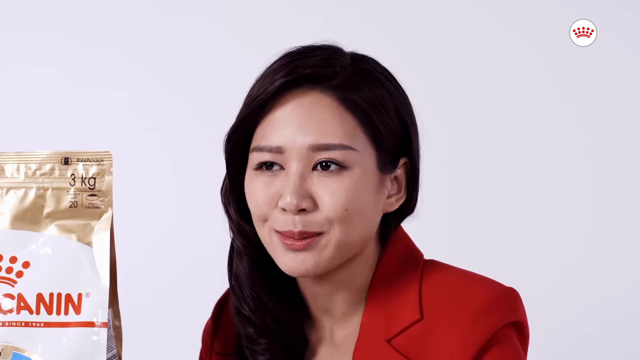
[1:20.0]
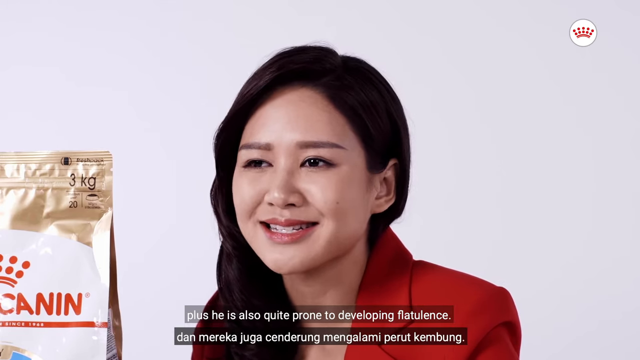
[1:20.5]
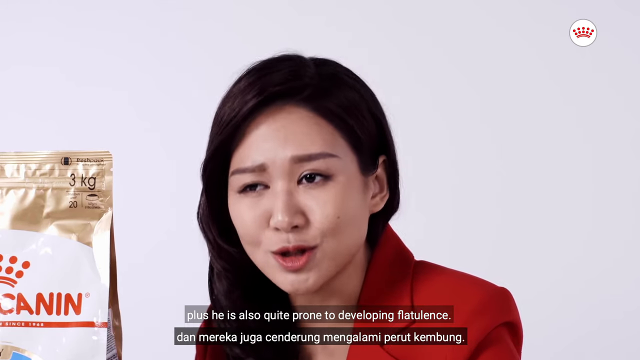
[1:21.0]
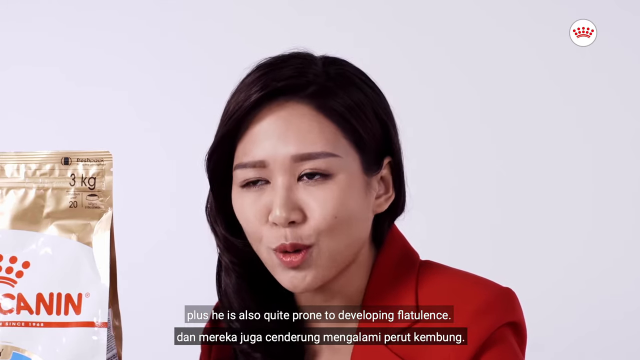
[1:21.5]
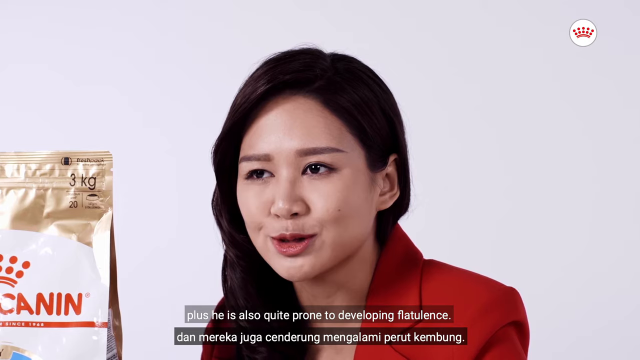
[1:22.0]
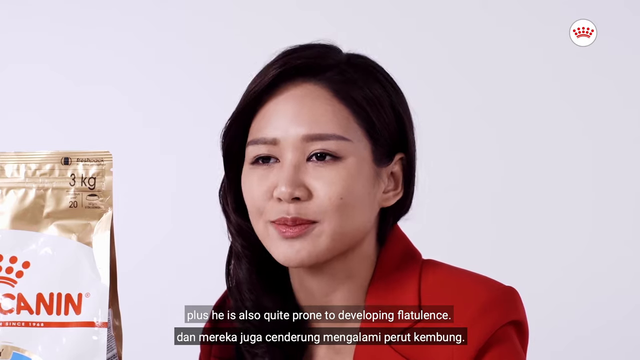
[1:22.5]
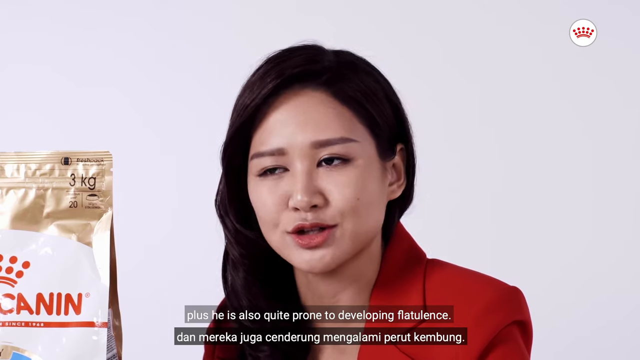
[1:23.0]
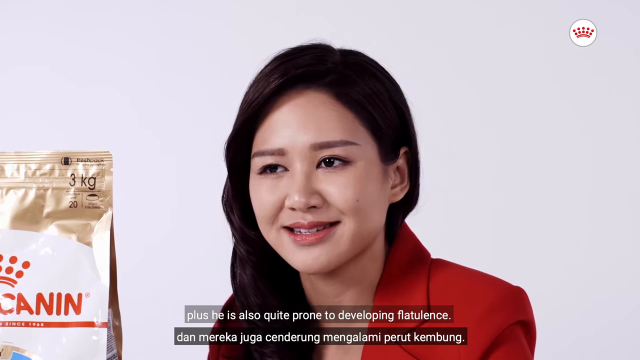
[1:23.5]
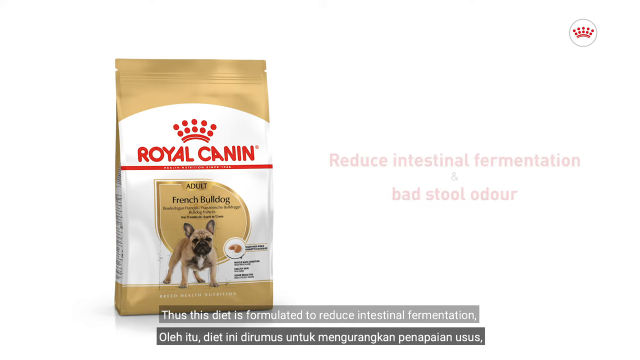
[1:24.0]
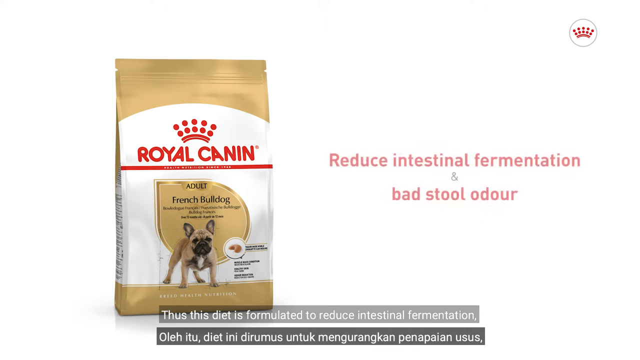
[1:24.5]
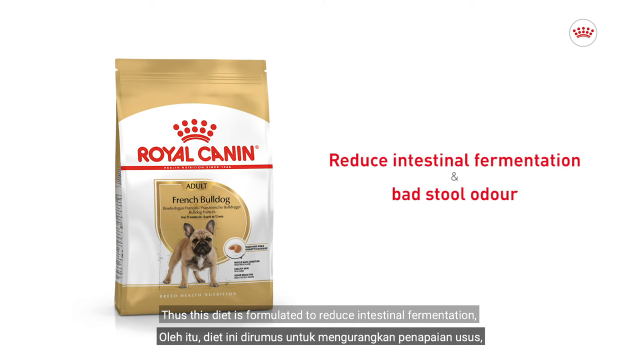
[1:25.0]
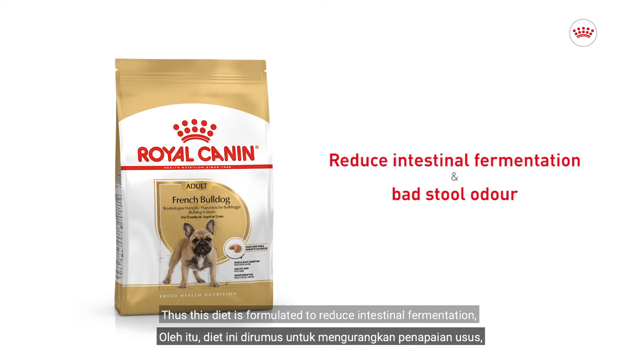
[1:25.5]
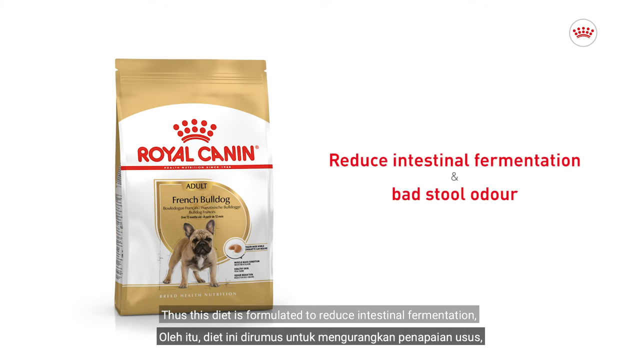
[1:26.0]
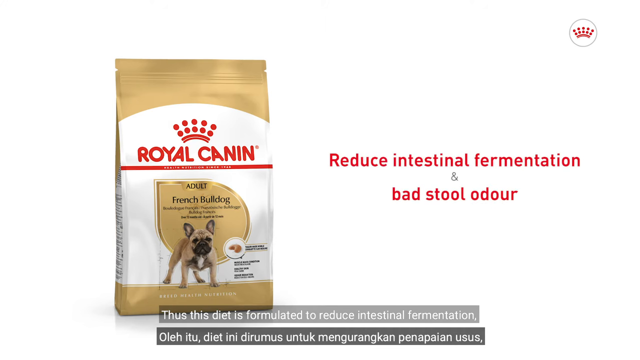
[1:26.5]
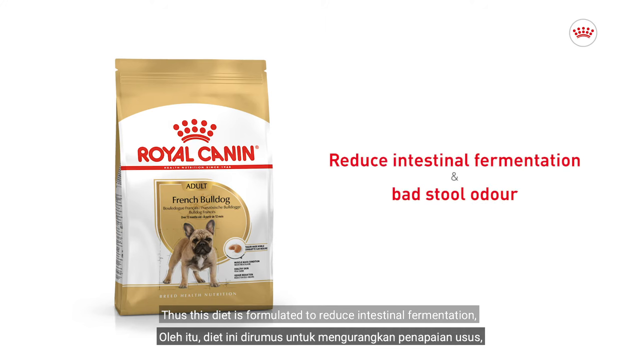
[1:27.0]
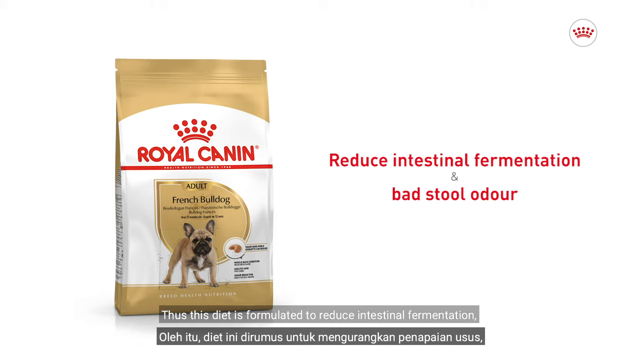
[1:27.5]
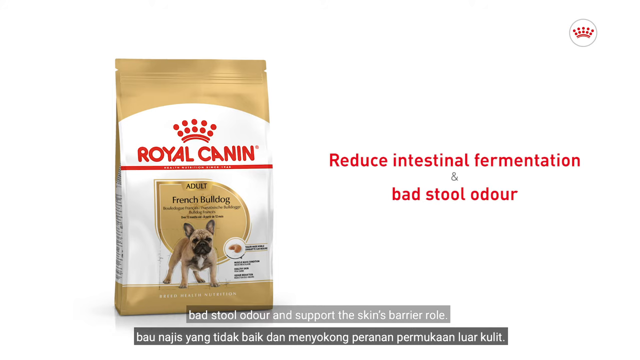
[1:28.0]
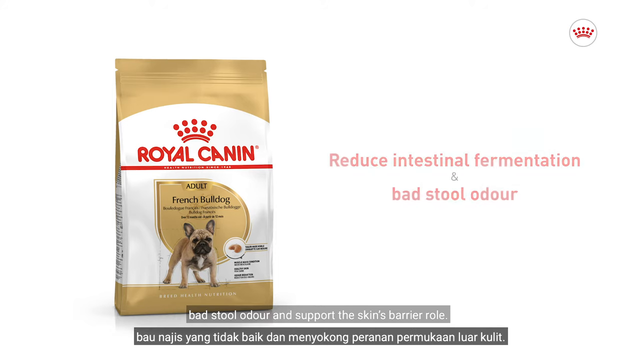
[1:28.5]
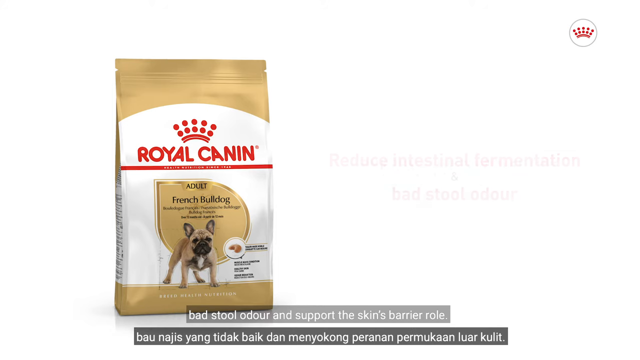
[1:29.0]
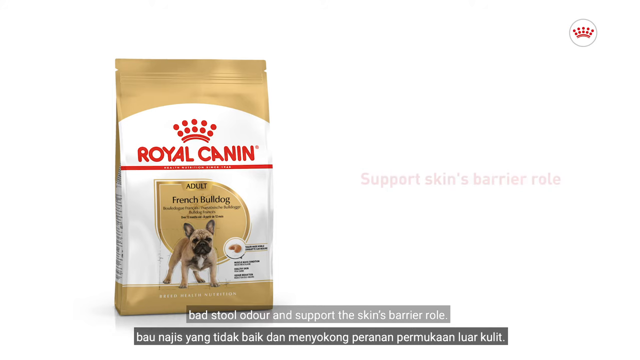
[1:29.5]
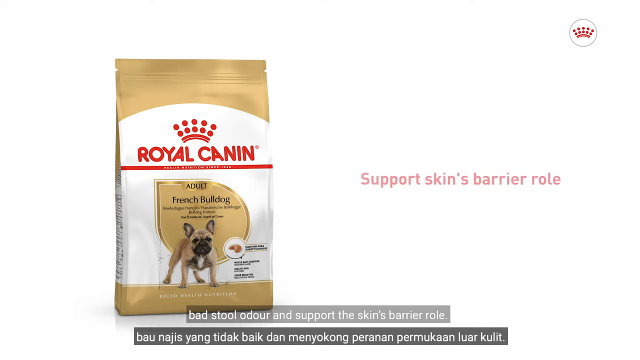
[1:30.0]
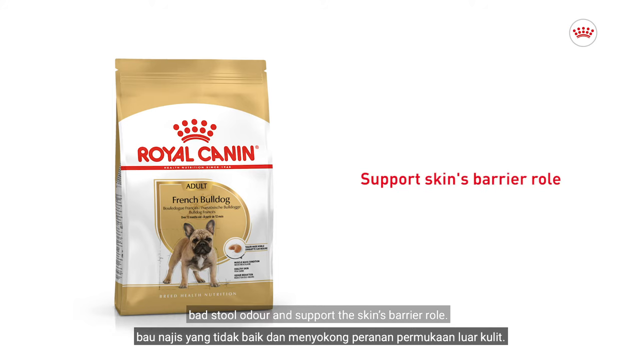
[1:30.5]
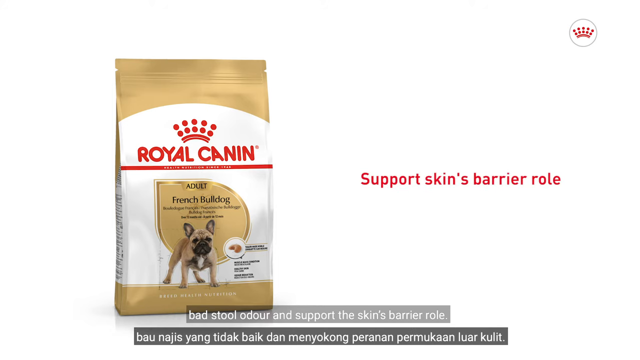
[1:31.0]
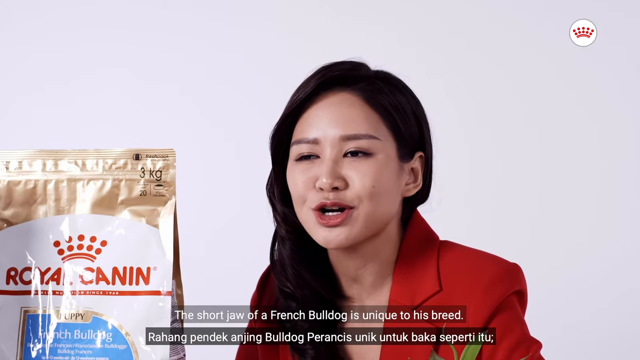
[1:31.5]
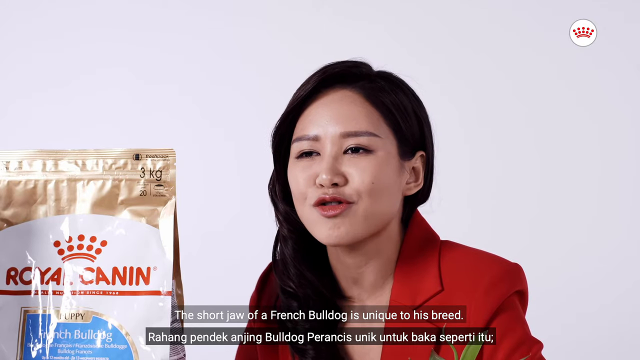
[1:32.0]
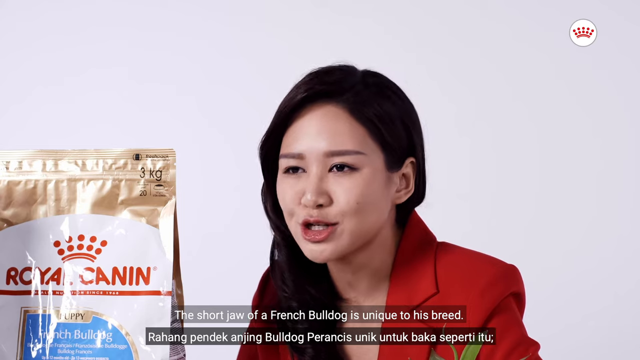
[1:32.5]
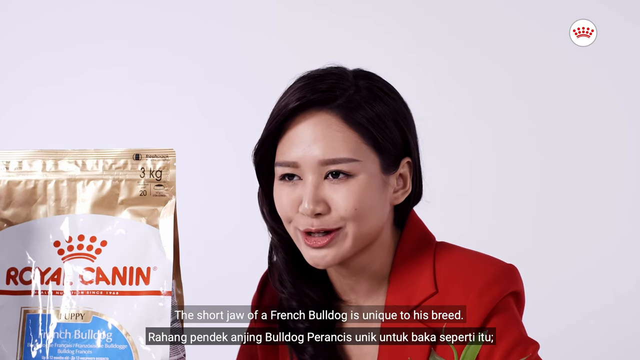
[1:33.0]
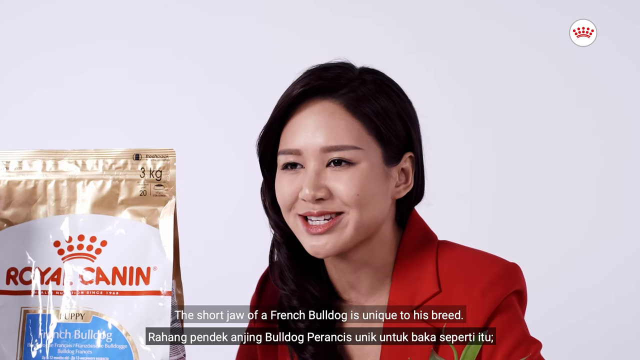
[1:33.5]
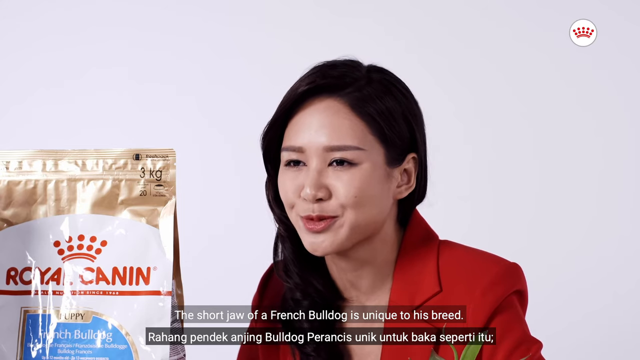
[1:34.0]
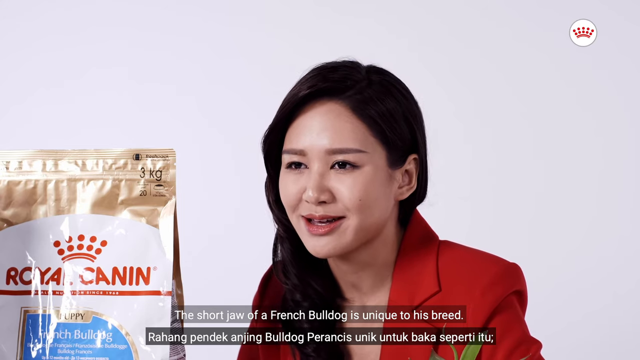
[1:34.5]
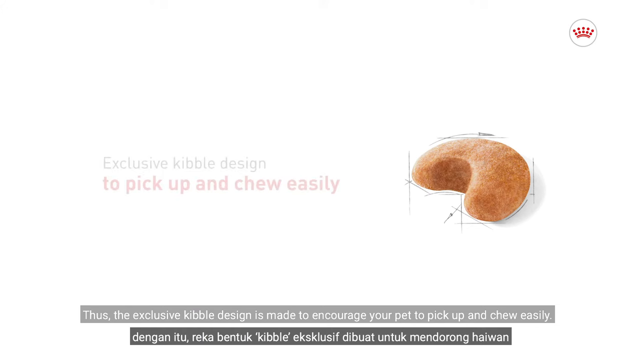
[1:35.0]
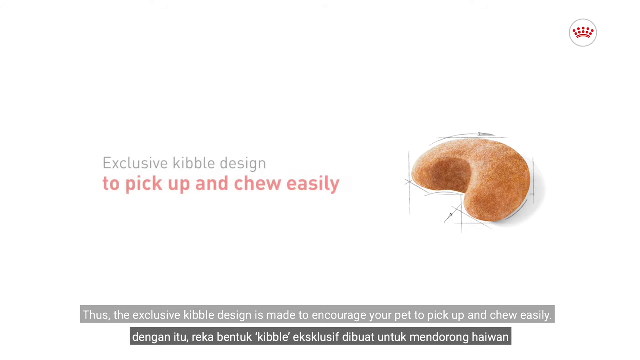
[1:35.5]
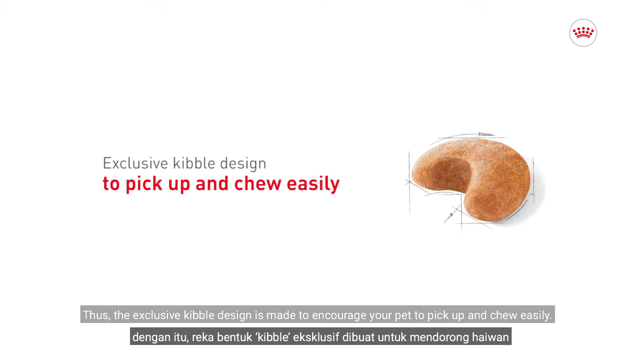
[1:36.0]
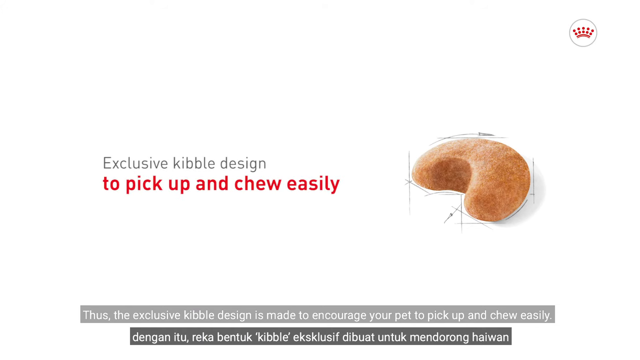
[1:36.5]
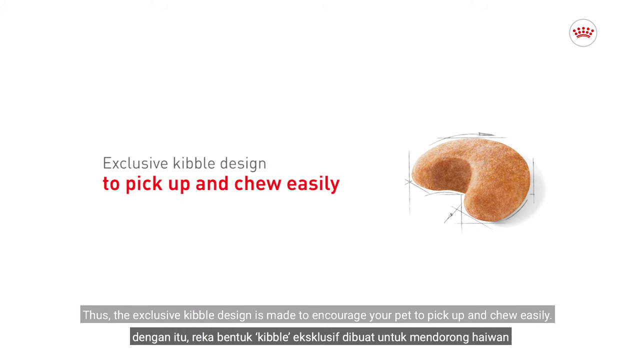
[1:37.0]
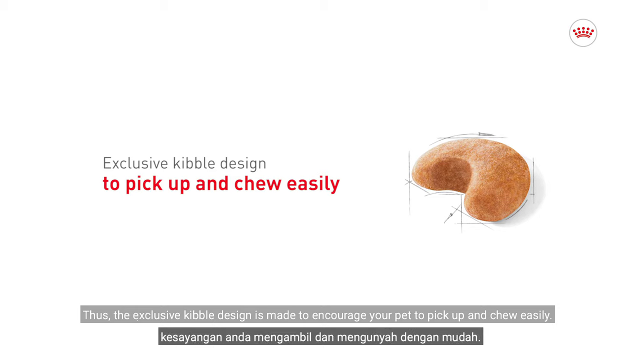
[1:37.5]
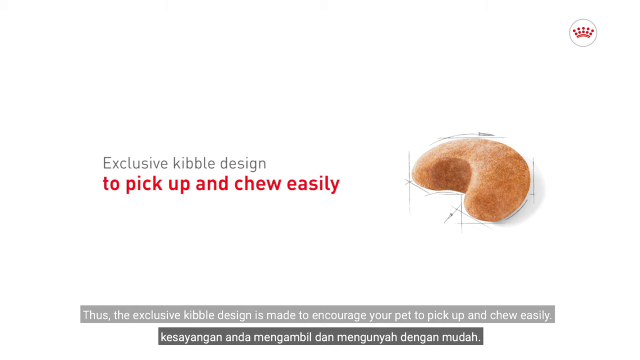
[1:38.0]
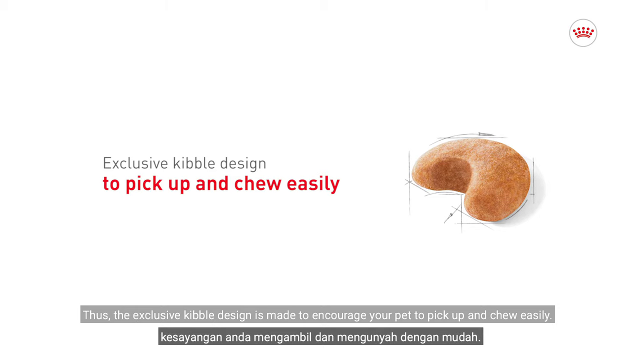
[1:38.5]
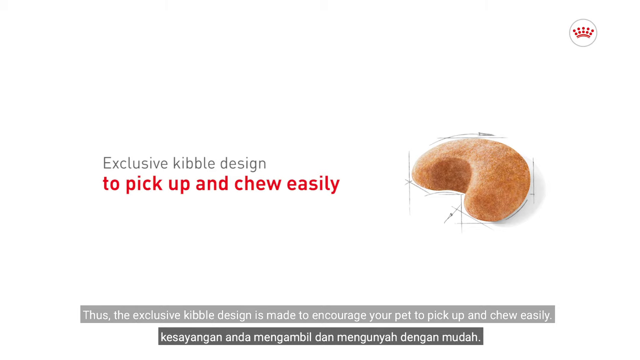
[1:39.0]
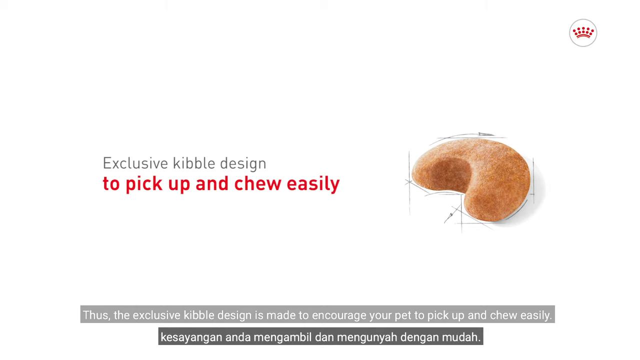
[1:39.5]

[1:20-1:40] An Asian woman with black hair smiles at the camera. She is sitting down with a bag of dog food to her right, wearing a red suit jacket and speaking to the camera, her words displayed in subtitles. Next, a bag of dog food is shown on the left with red text to its right that says "reduce intestinal fermentation and bad stool odour". Another statement then appears to the right of the dog food: "support skin's barrier role".